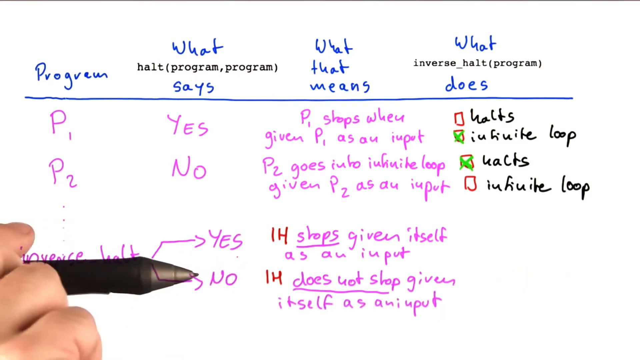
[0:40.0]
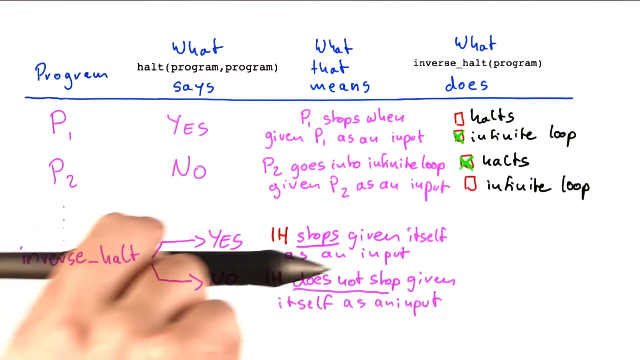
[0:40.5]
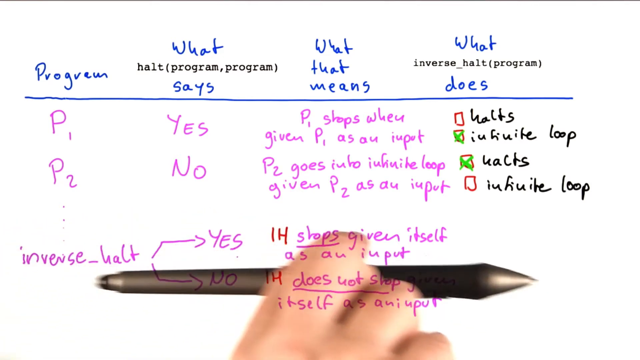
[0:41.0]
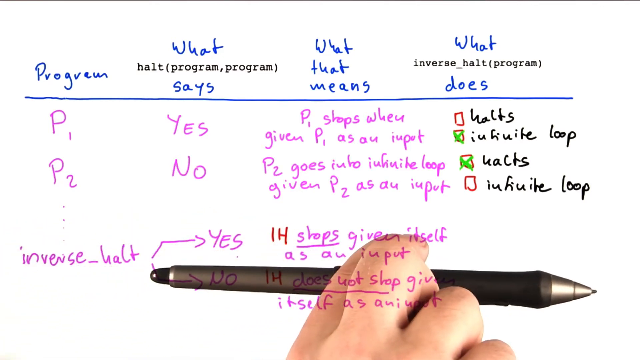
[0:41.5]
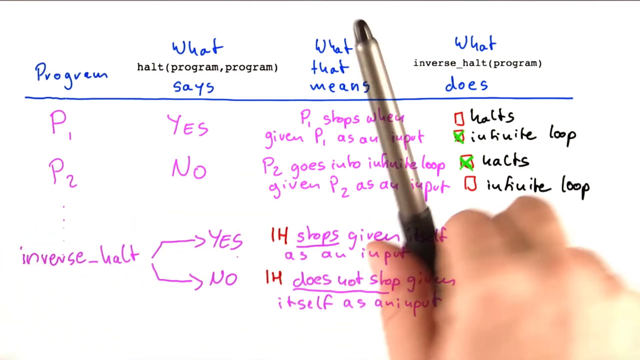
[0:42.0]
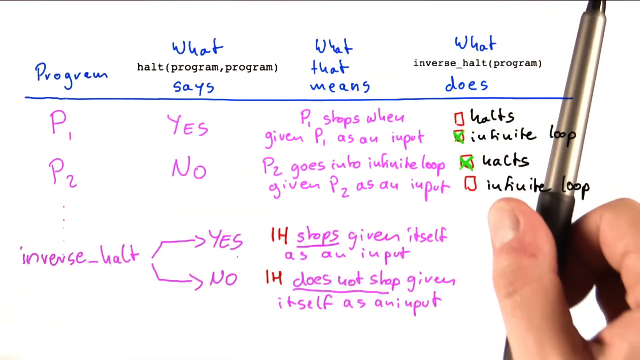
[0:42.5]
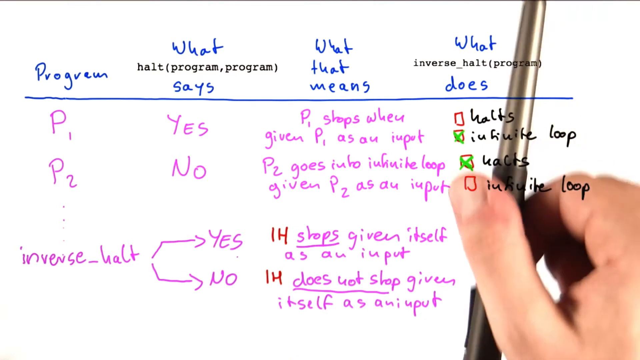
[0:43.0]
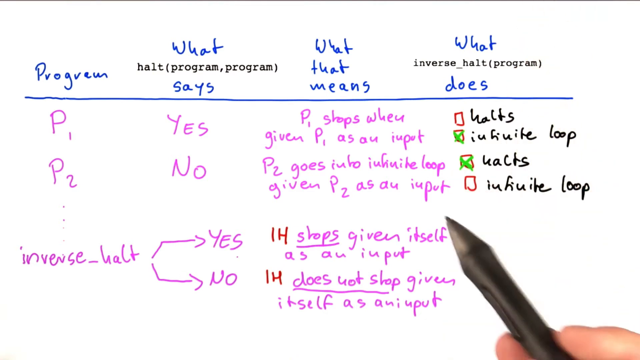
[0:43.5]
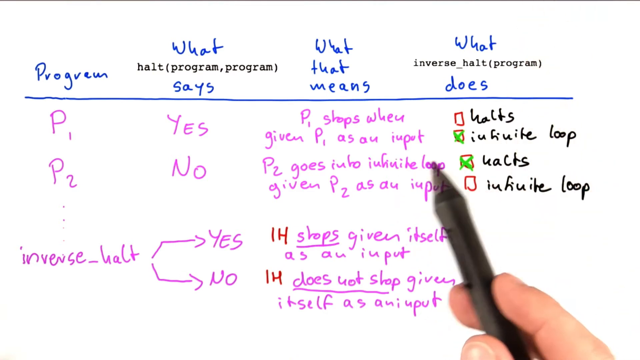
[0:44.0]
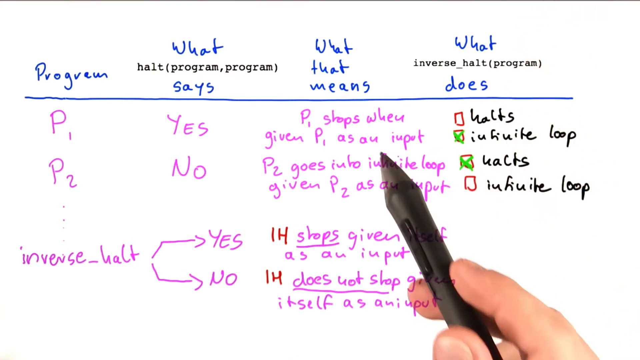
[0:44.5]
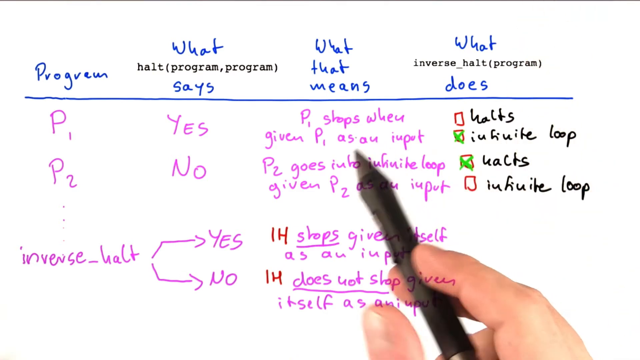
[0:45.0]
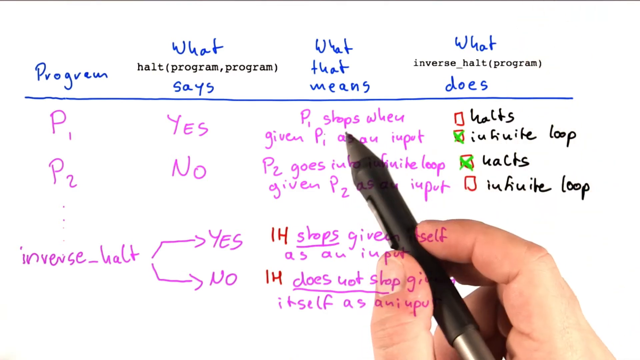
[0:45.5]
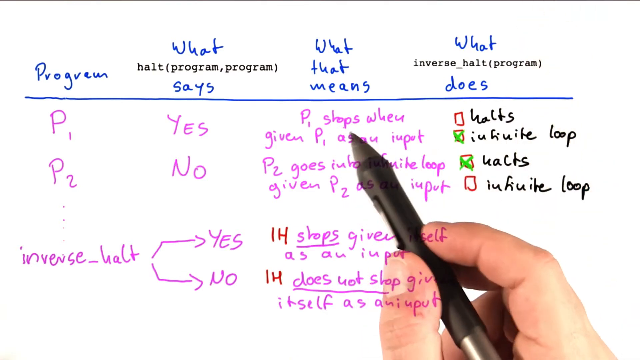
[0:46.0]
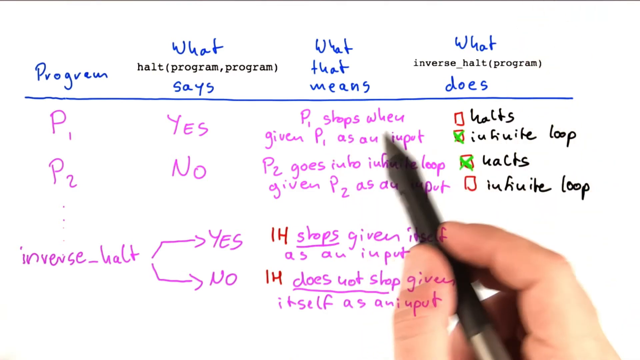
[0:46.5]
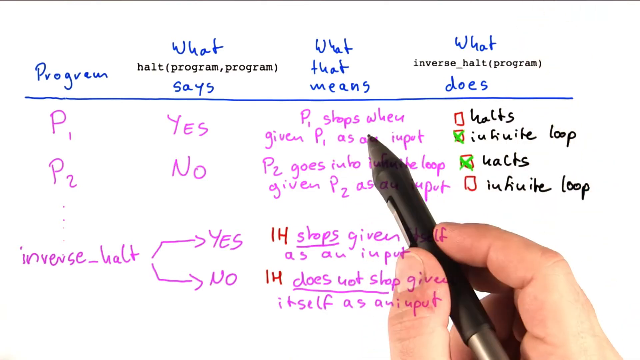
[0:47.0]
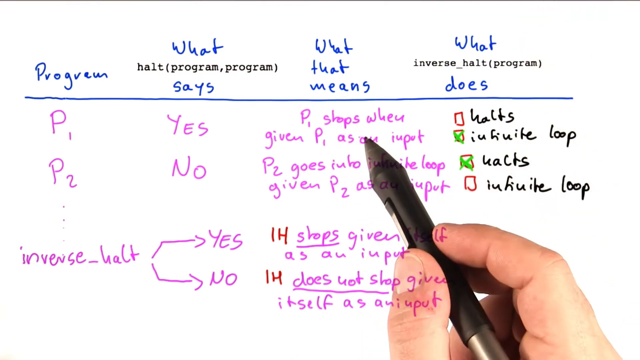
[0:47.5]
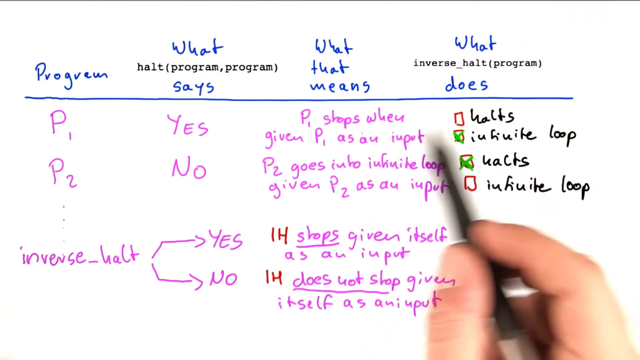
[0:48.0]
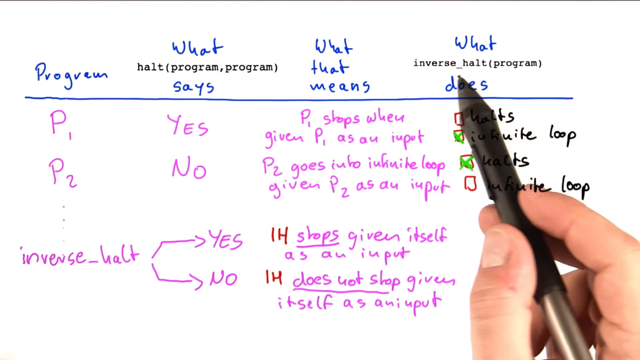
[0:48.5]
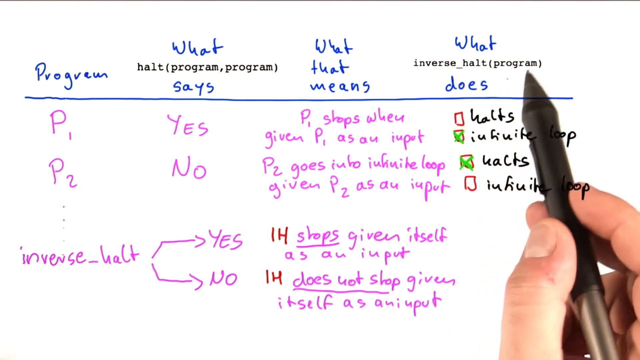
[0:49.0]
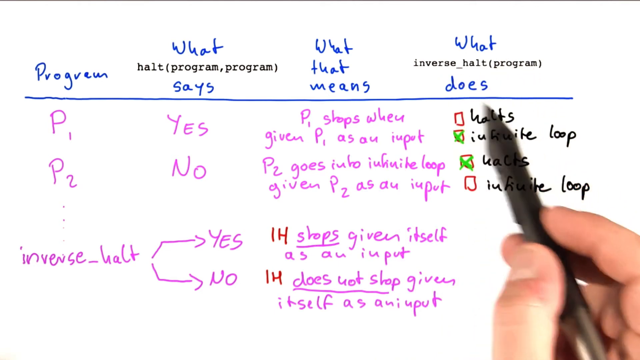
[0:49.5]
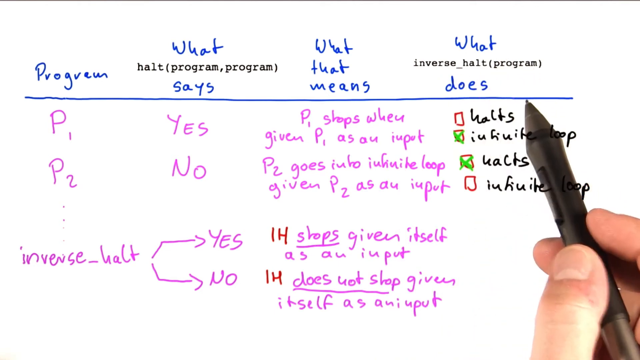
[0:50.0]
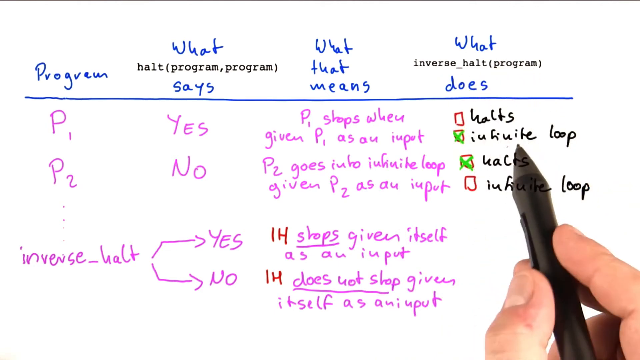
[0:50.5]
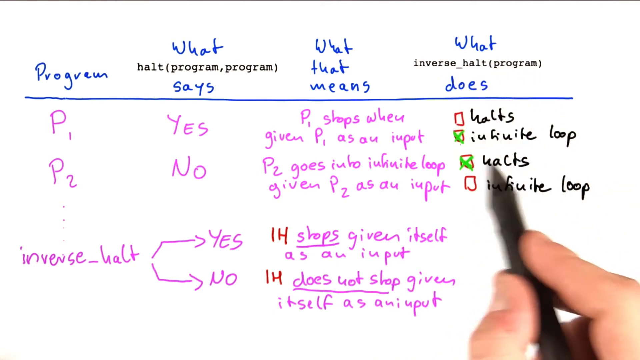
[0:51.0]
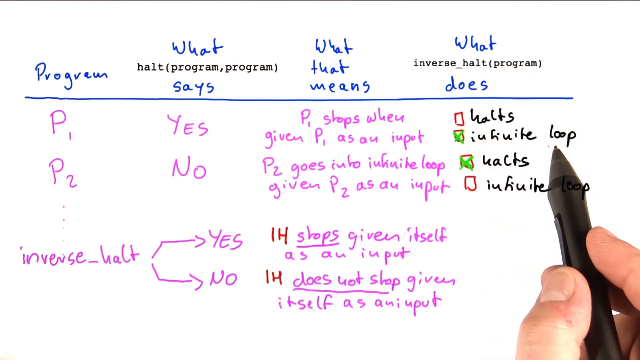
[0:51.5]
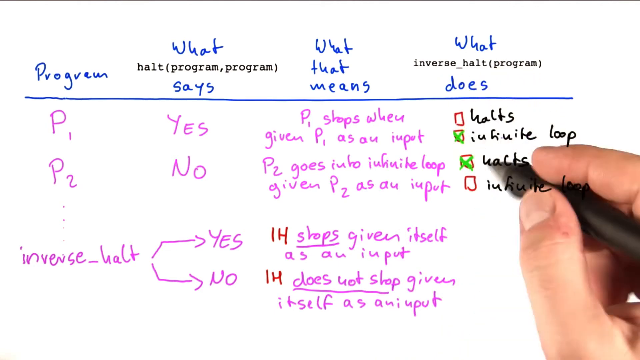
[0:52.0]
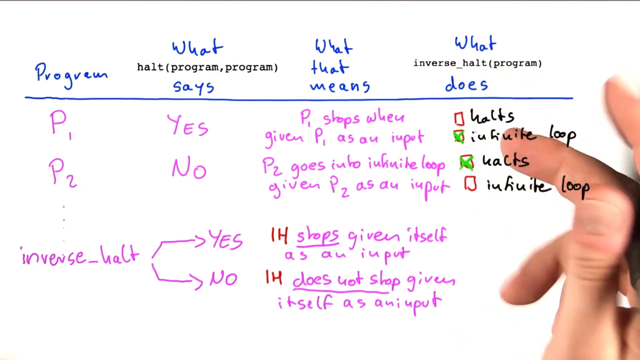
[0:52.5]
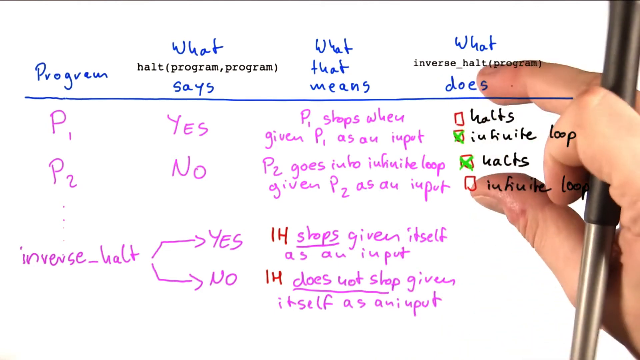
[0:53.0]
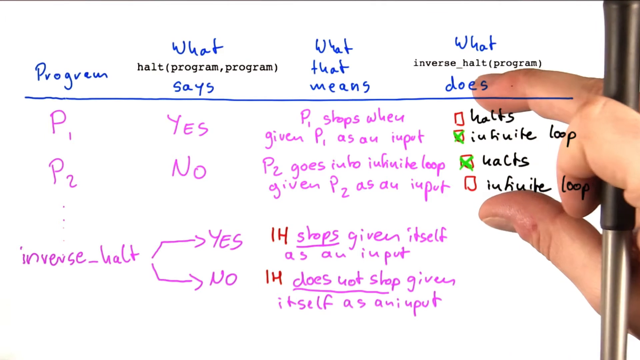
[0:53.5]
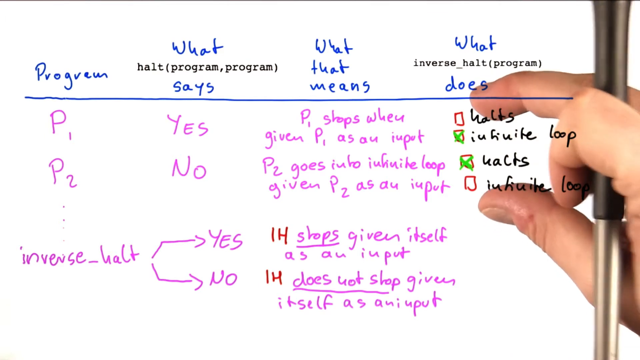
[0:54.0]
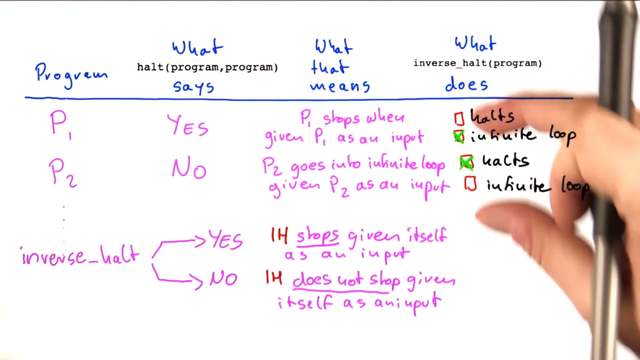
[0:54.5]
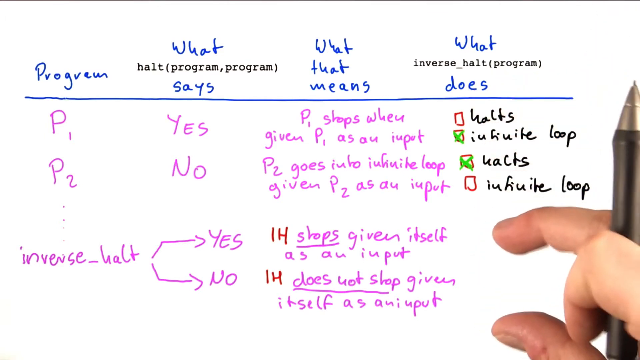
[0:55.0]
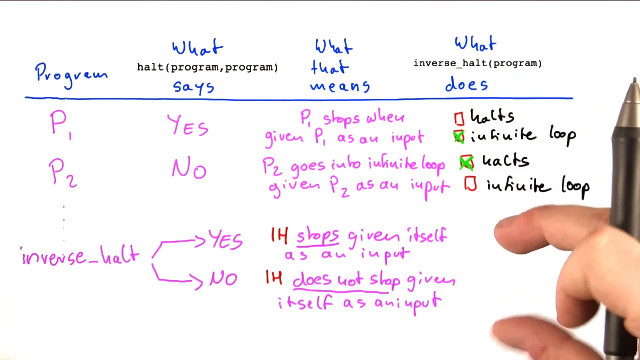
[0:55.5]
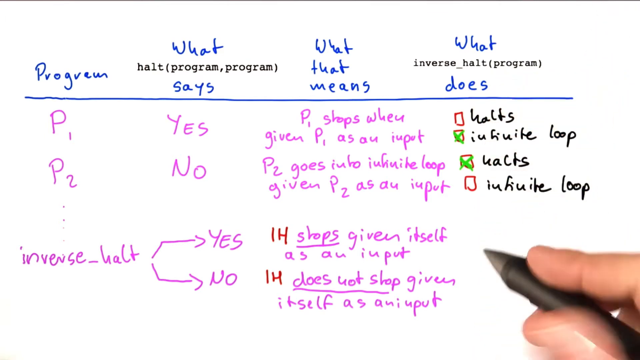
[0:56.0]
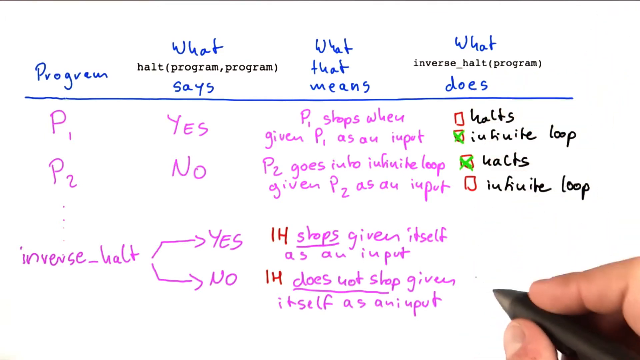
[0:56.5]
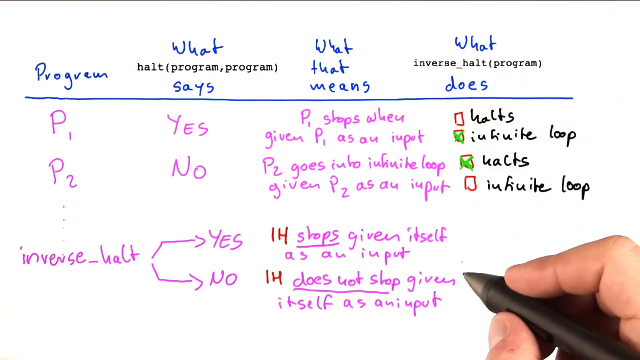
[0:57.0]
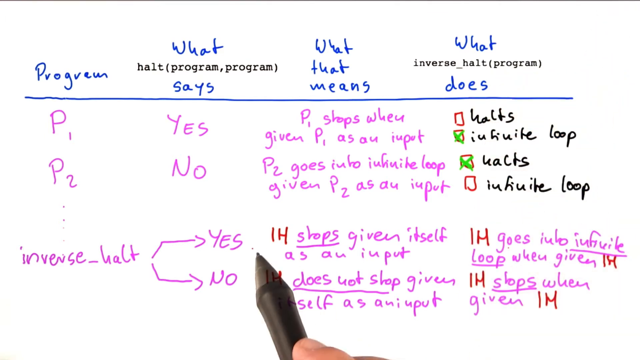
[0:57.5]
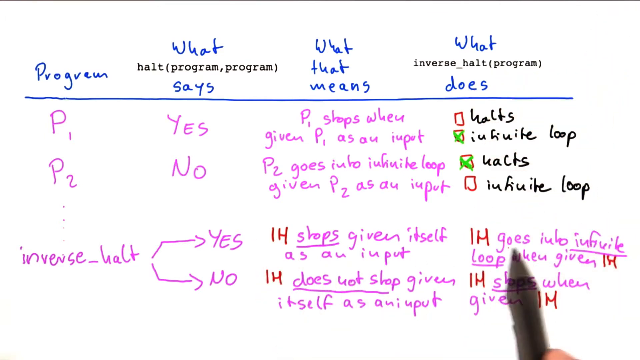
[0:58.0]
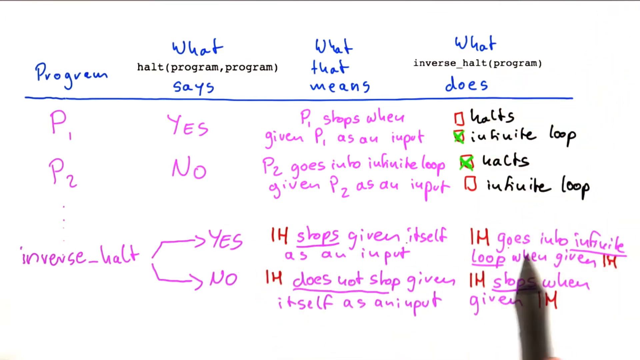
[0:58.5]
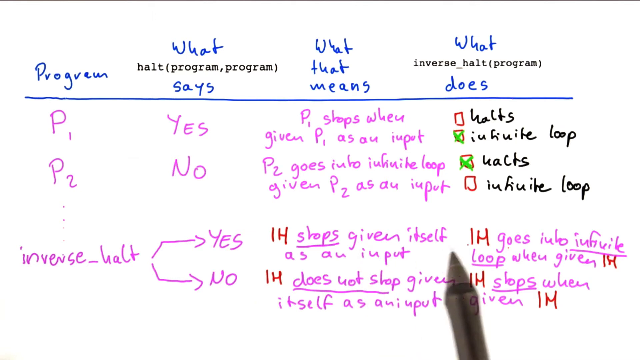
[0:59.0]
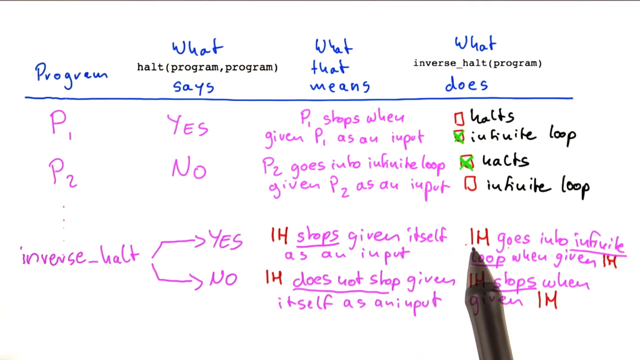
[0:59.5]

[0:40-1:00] A hand holding a black pen marks on a whiteboard. A line runs across the top, with four categories: "program" on the left with P1 and P2 below it, "what says" with yes and no below it, then "what that means" and "what does", the latter showing whether there is an infinite loop or it halts. Below all this, inverse_halt is written with yes or no; for yes it reads "IH stops given itself as an input" and for no "IH does not stop given itself as an input". The person moves the pen around, circling or underlining various things, then uses two fingers to point at the last section, "what does", for P1 and P2, where it is either halt or infinite loop. They then put their fingers down below. Next, in the last column, next to yes it shows "IH goes into infinite loop when given IH", and under no "IH stops when given IH".